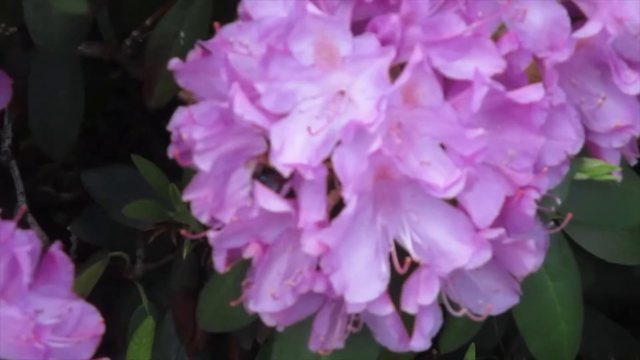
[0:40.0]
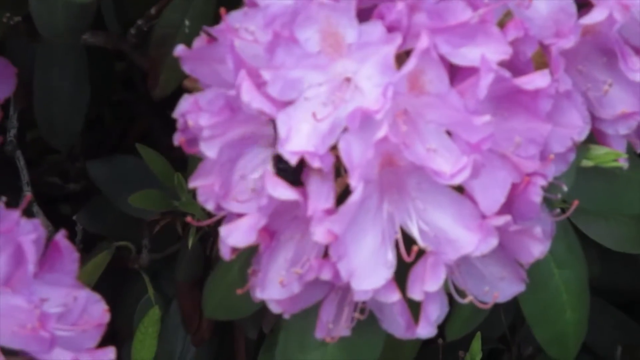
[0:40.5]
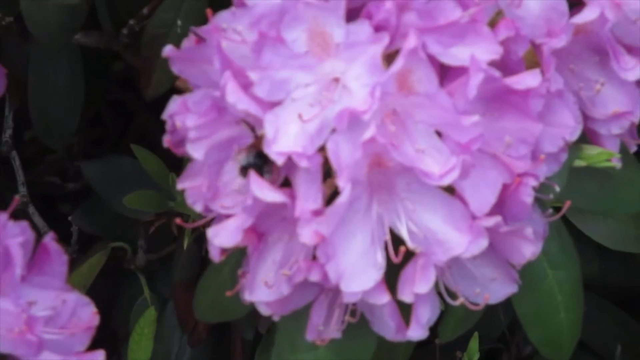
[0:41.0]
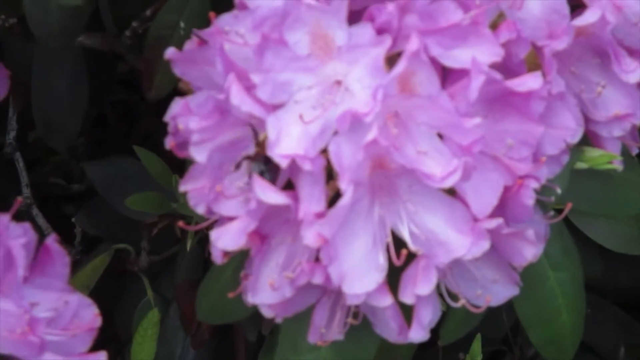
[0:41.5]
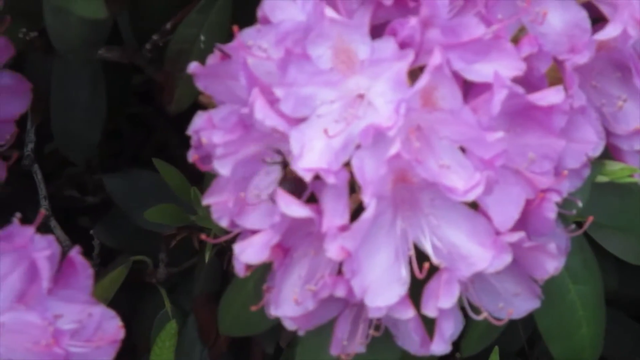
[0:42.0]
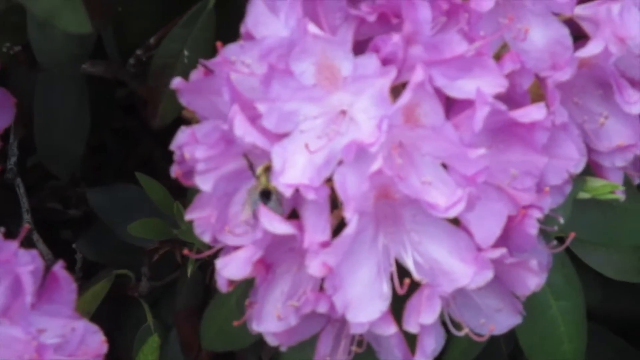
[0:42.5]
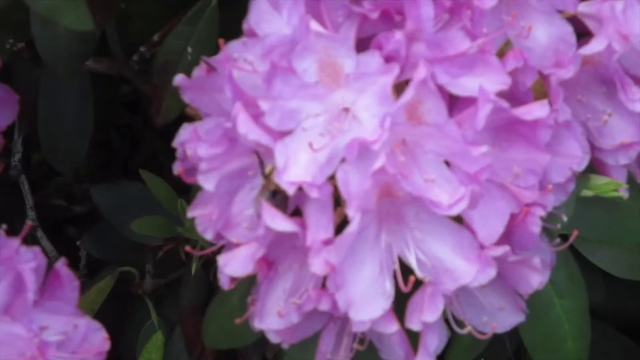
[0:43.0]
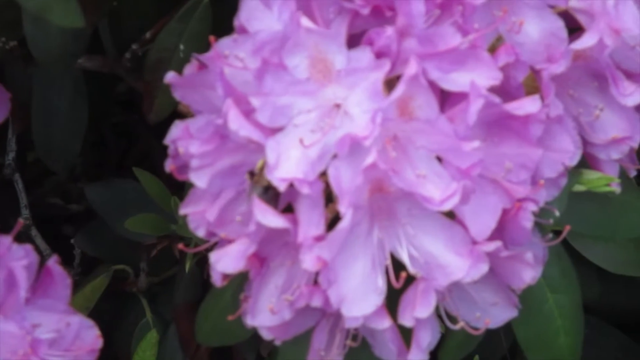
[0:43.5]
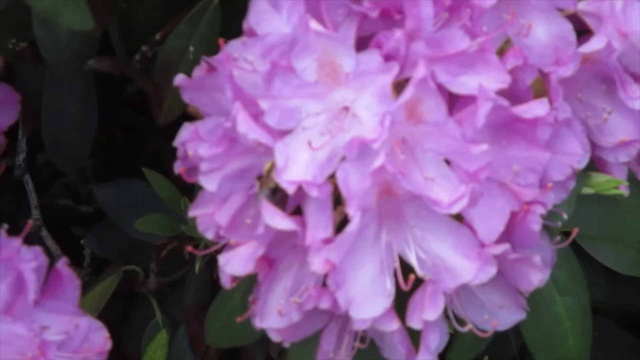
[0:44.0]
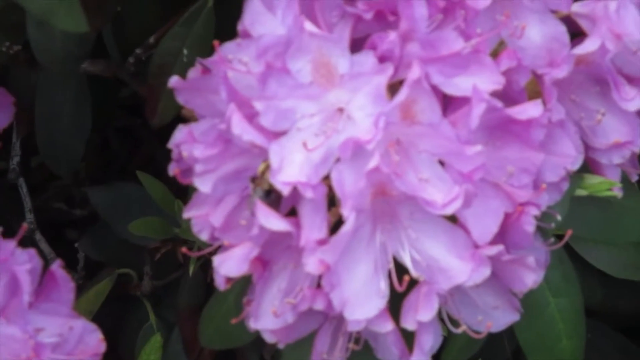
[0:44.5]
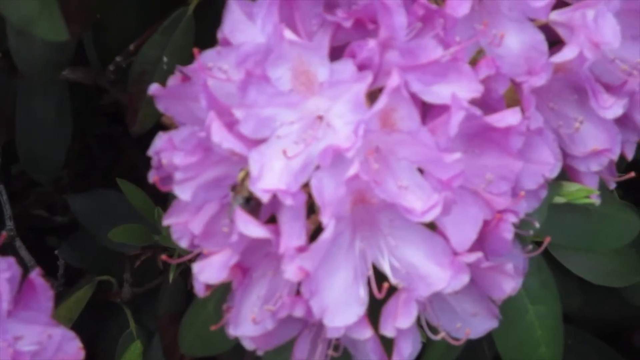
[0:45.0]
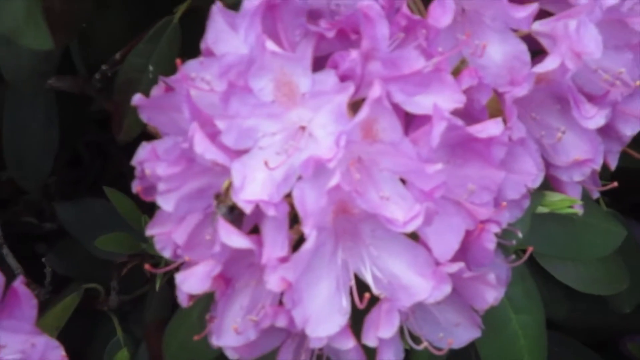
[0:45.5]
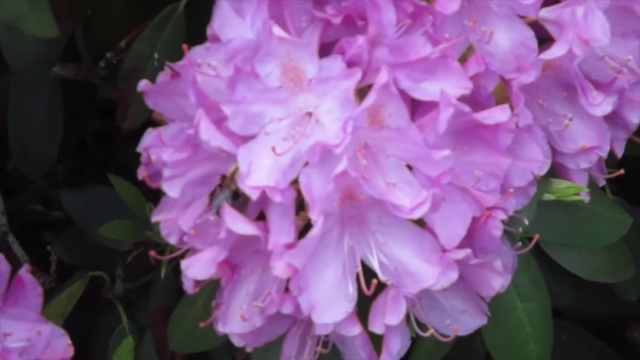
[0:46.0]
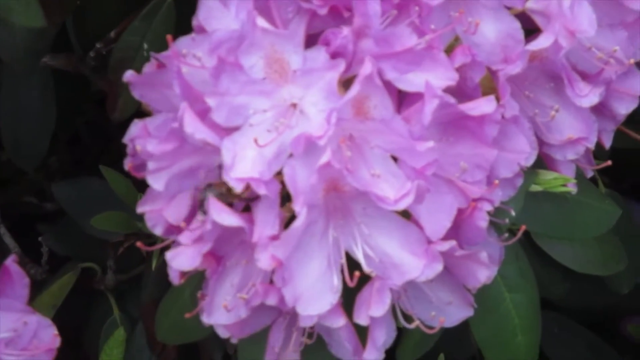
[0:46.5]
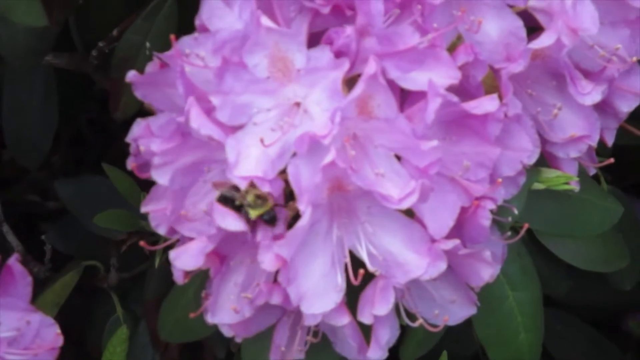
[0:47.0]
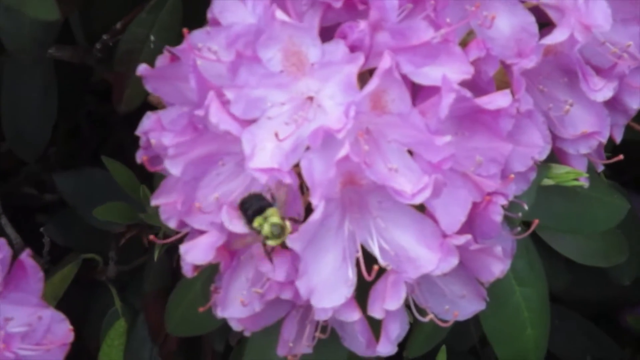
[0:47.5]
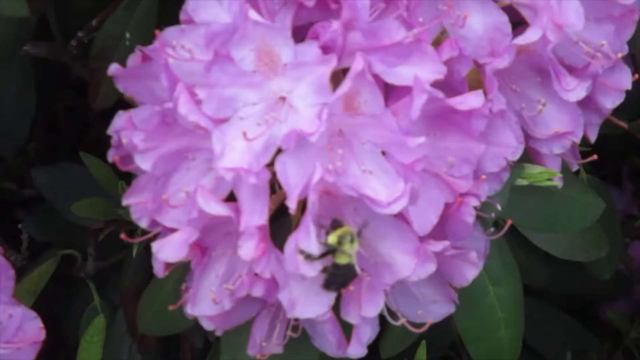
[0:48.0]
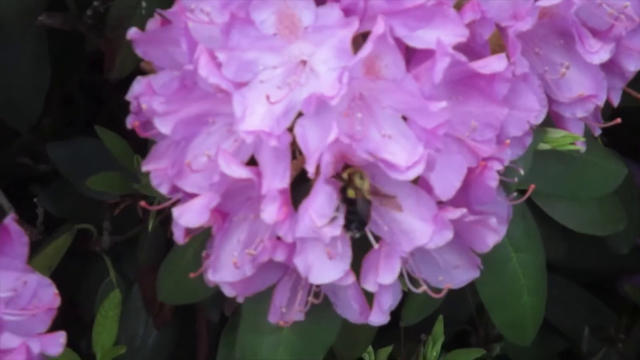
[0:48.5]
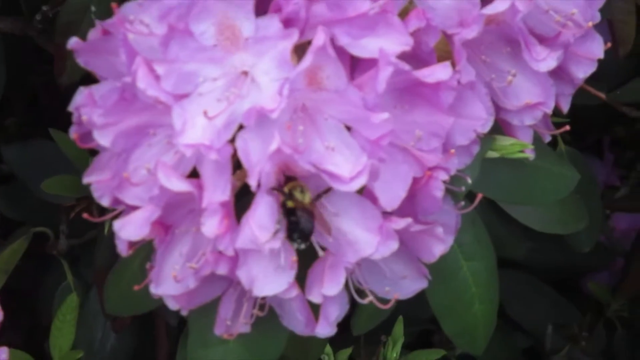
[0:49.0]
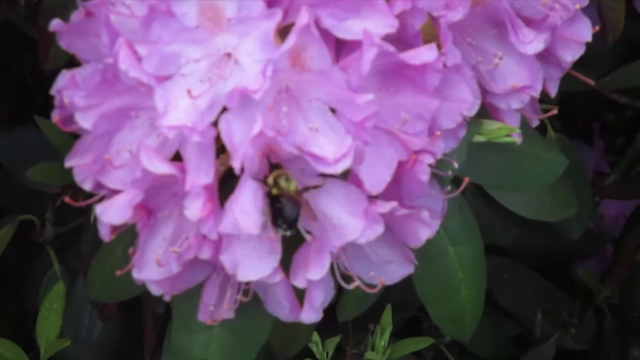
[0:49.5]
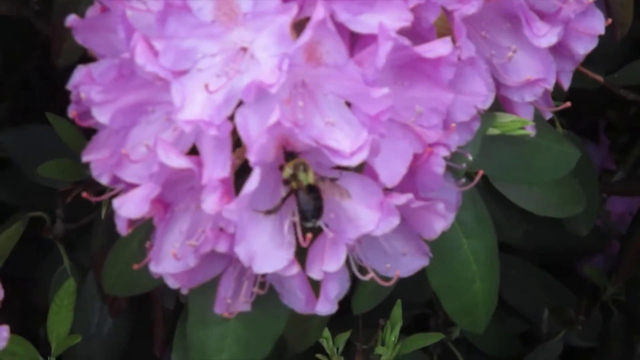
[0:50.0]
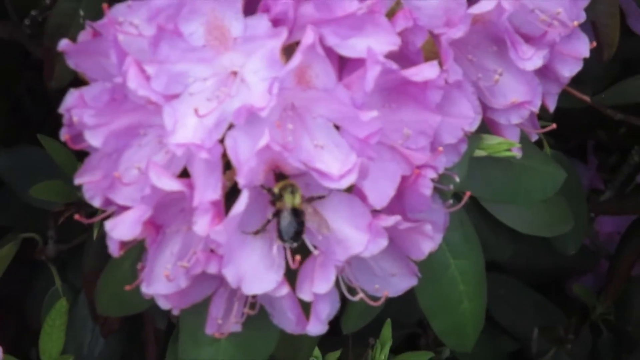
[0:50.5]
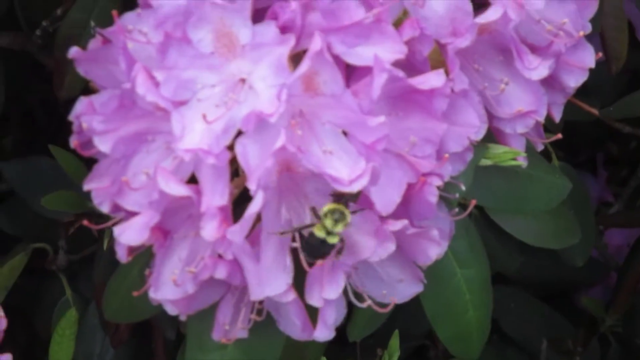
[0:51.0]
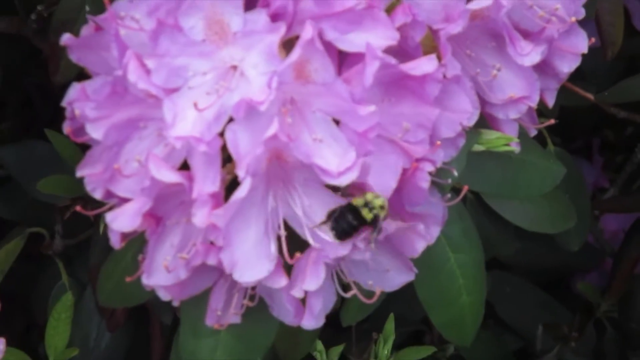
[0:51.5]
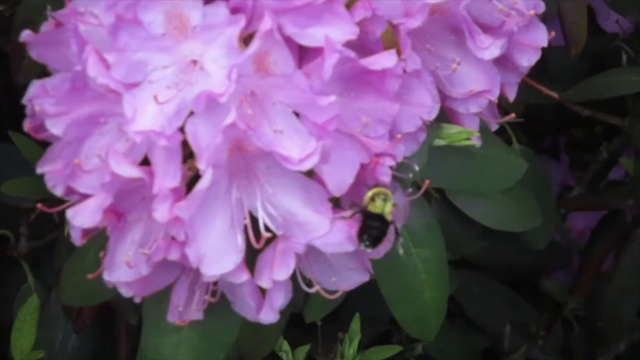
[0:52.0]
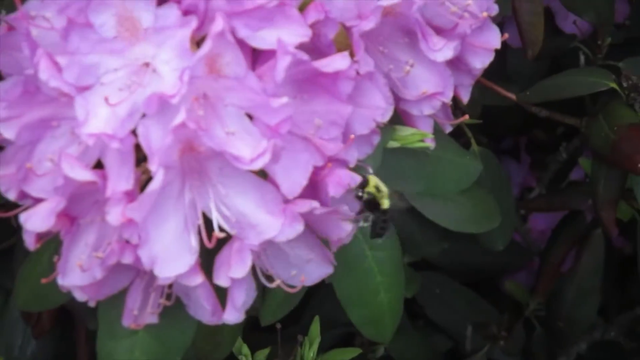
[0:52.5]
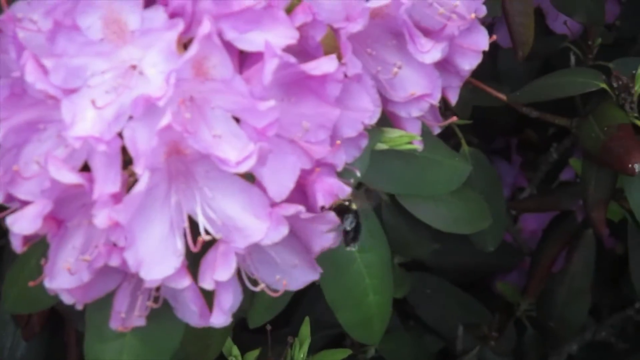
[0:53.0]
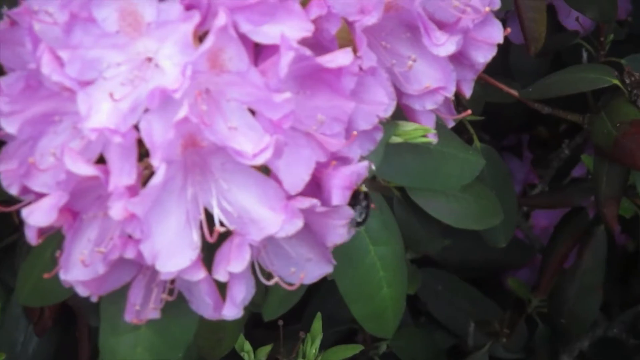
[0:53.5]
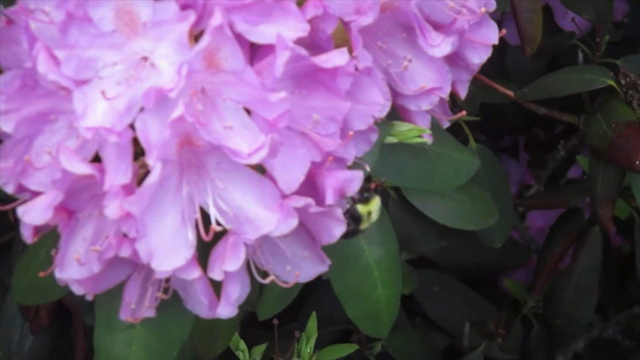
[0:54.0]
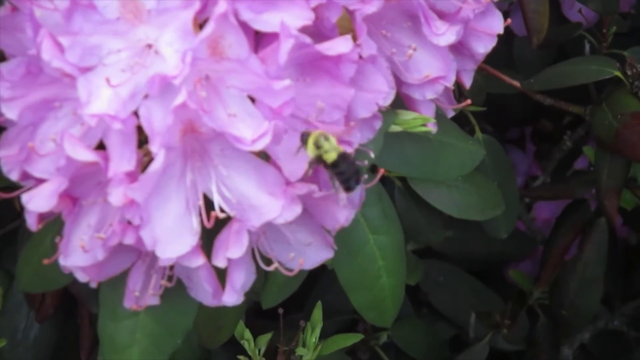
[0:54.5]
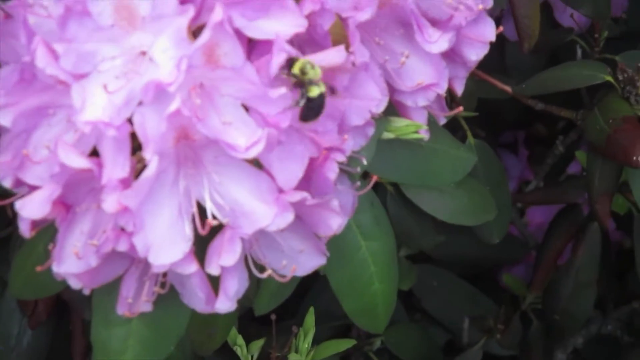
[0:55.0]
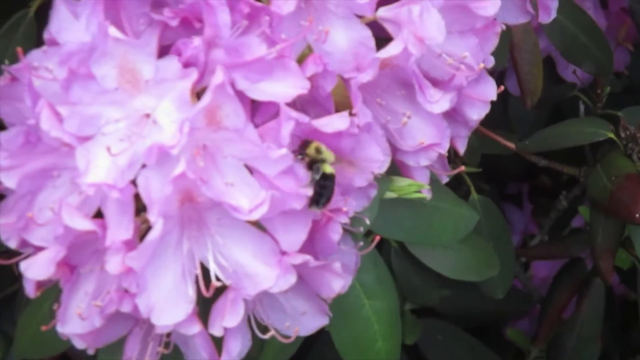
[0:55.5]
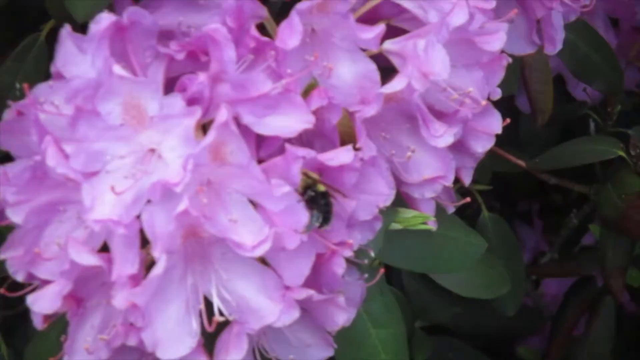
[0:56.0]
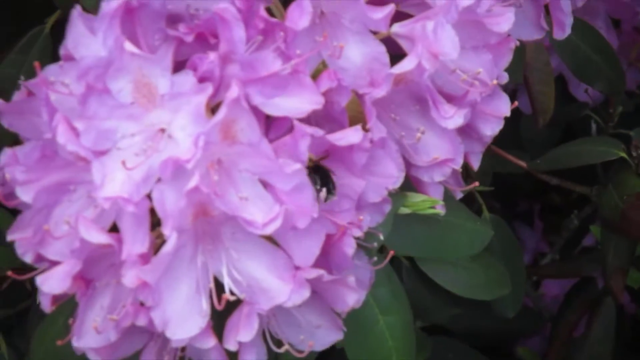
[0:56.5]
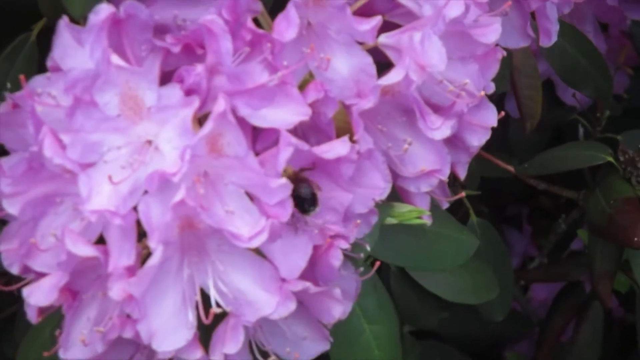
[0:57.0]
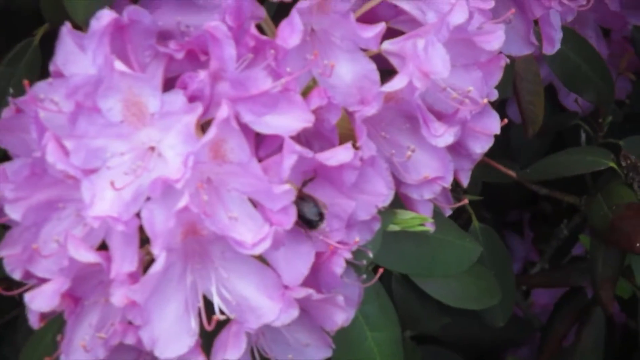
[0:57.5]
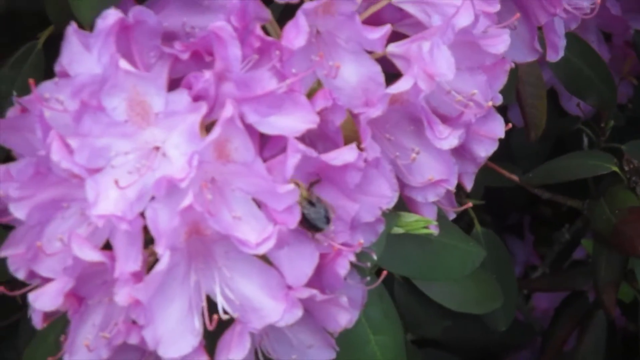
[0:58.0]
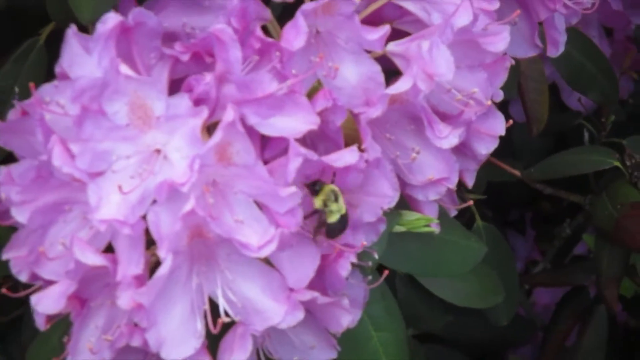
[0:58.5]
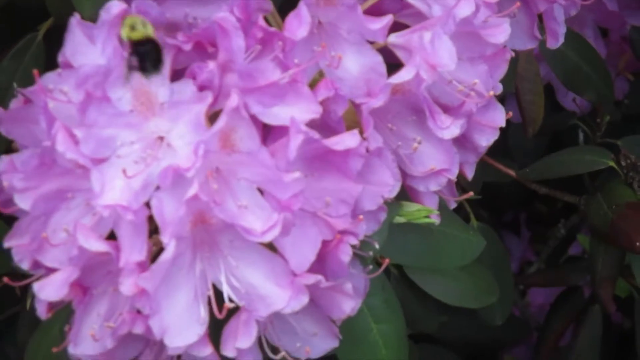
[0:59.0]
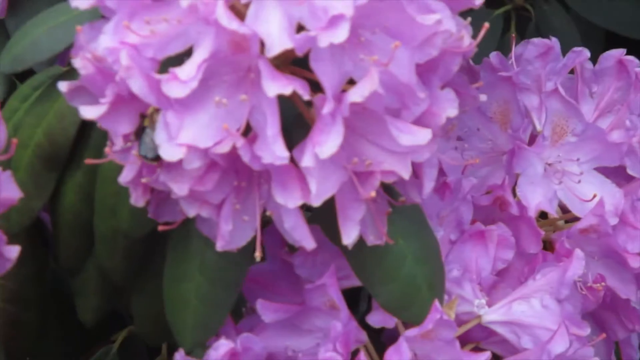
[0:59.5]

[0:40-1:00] The shot begins with a close-up of a cluster of light purple rhododendrons. The camera follows a bee as it crawls and burrows deeper into the cluster, moving its little arms around. The bee emerges, crawls around to another section of the flowers, and continues crawling right and up, then into one of the flowers, probably collecting pollen. The video cuts to another angle of the rhododendrons and ends abruptly. The camera is very shaky, zoomed very far in as it tries to follow the bee.